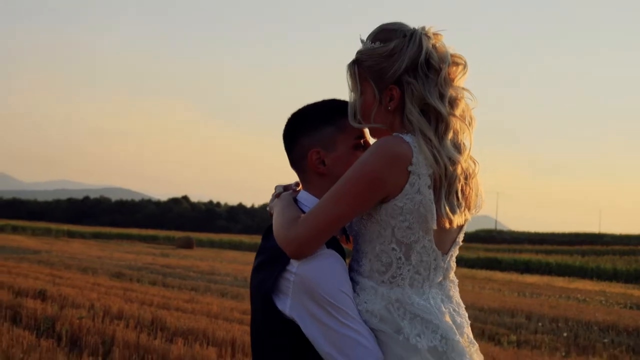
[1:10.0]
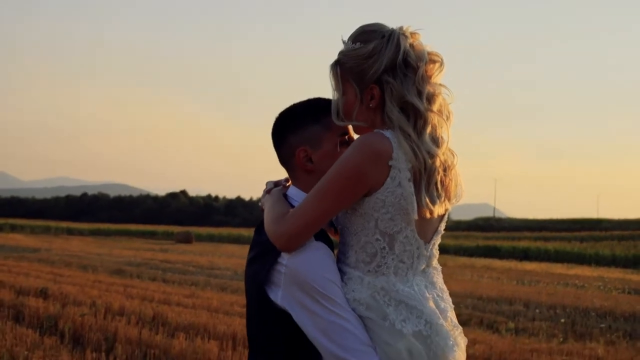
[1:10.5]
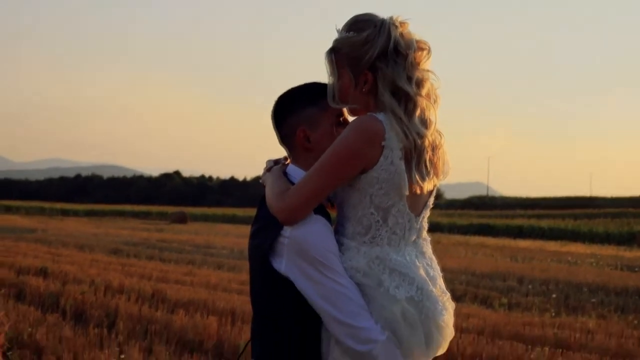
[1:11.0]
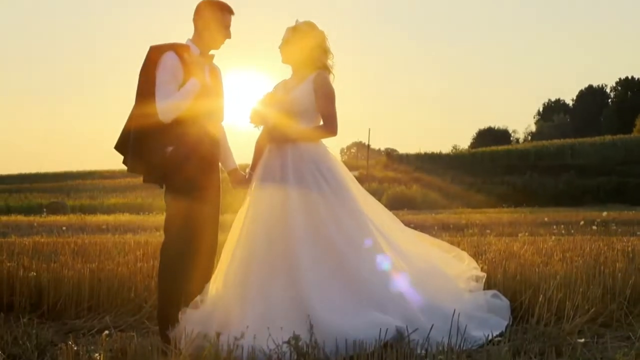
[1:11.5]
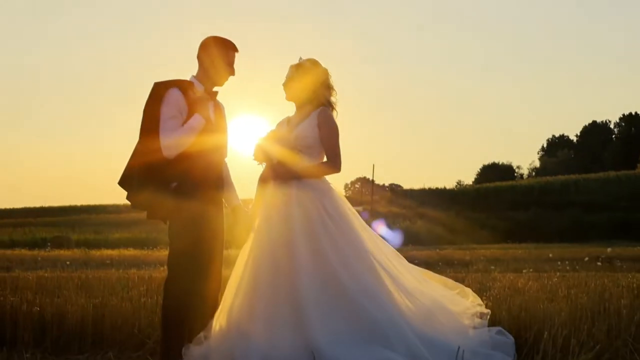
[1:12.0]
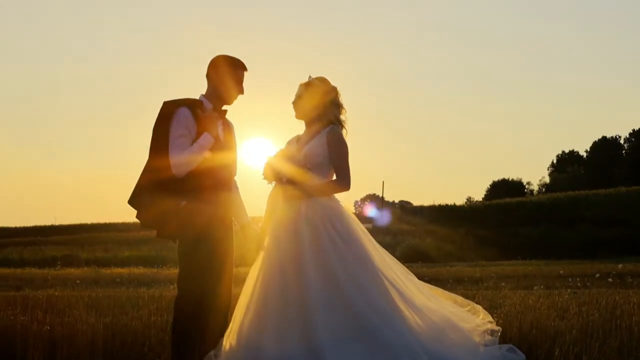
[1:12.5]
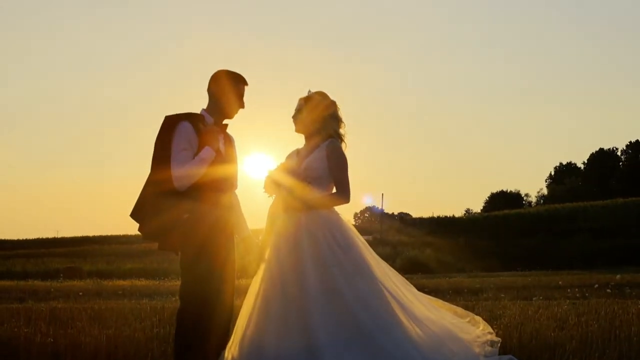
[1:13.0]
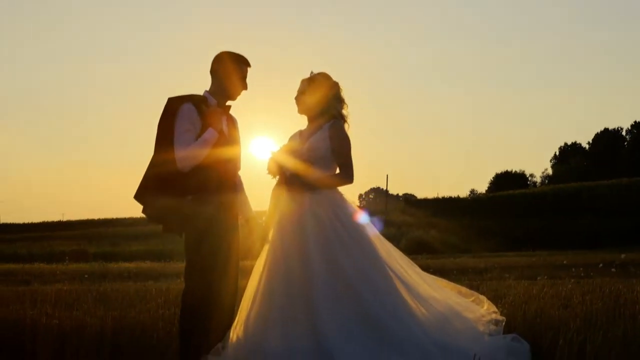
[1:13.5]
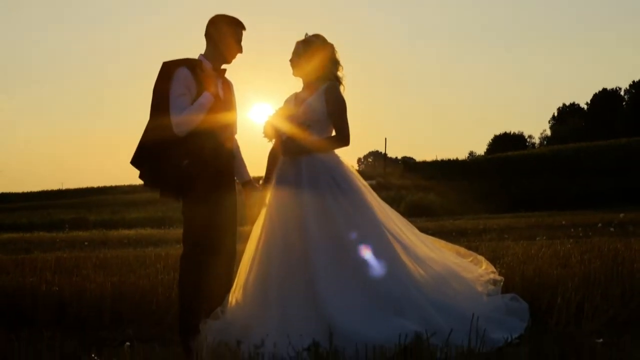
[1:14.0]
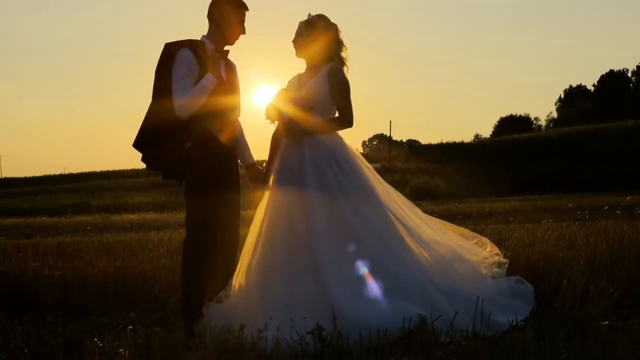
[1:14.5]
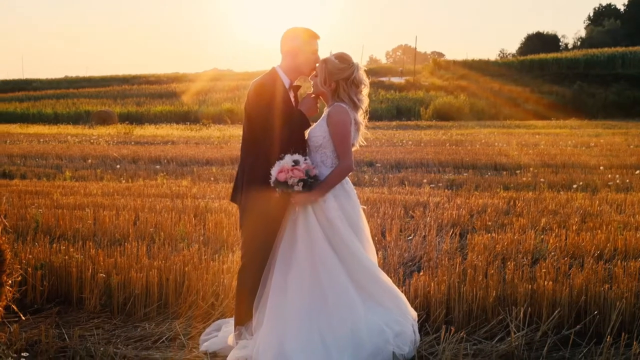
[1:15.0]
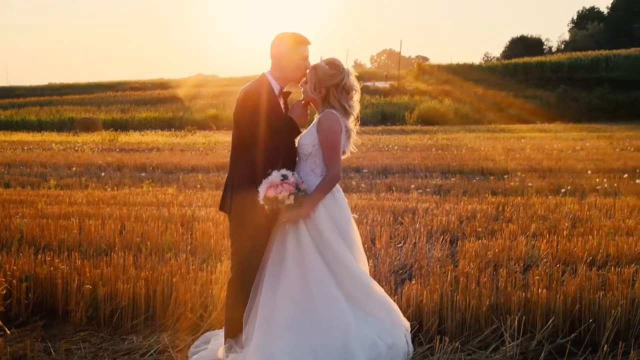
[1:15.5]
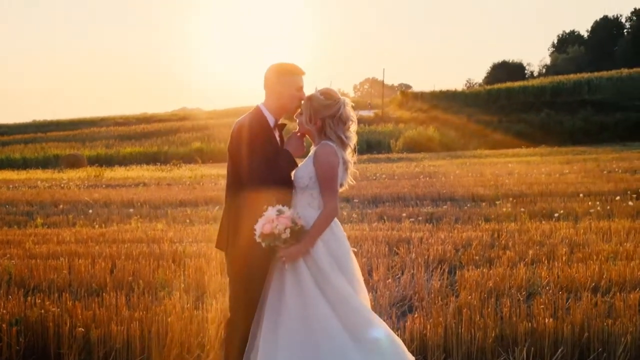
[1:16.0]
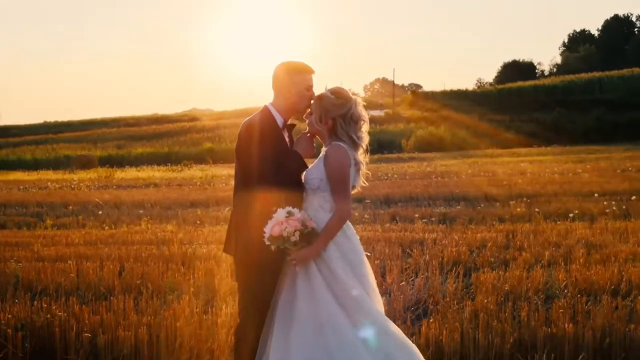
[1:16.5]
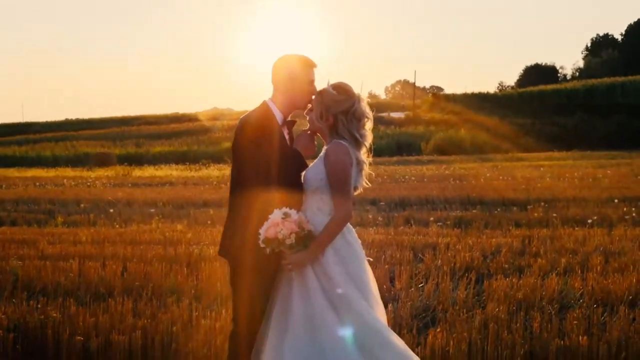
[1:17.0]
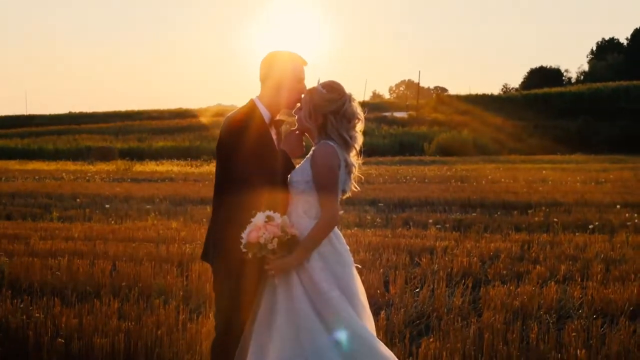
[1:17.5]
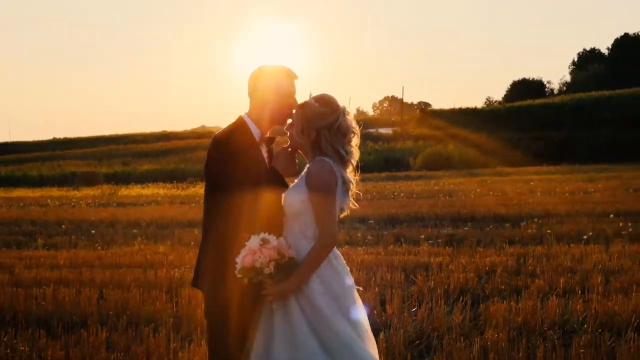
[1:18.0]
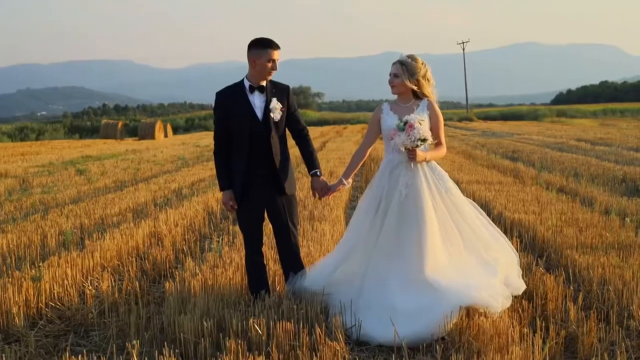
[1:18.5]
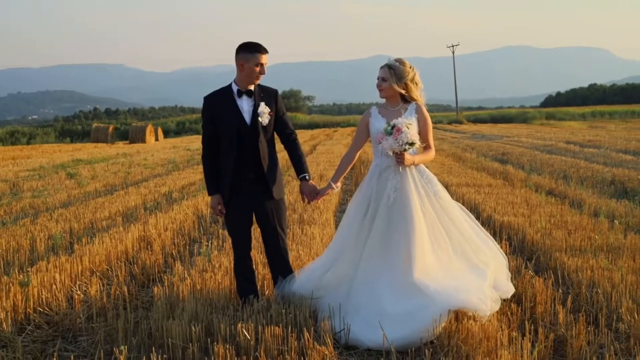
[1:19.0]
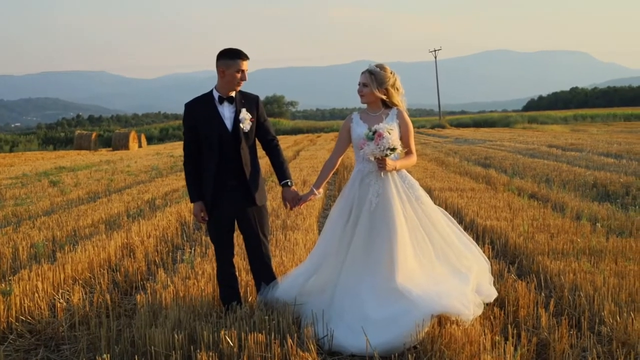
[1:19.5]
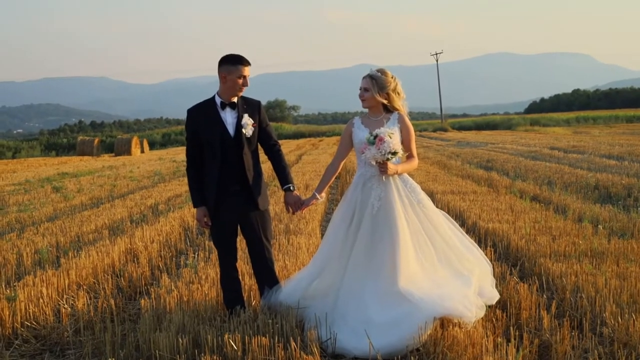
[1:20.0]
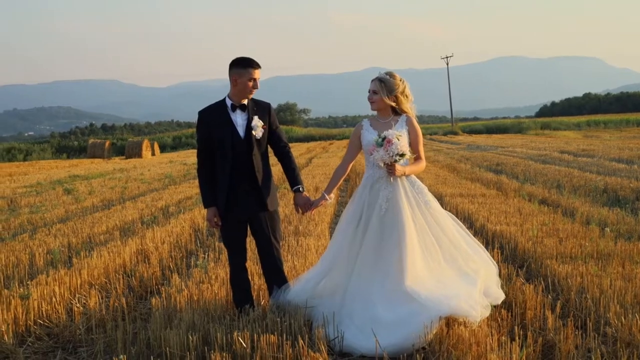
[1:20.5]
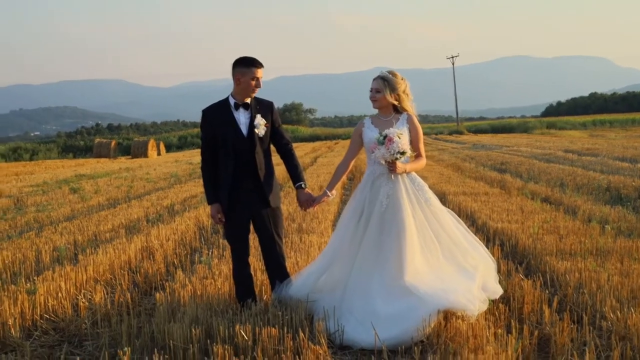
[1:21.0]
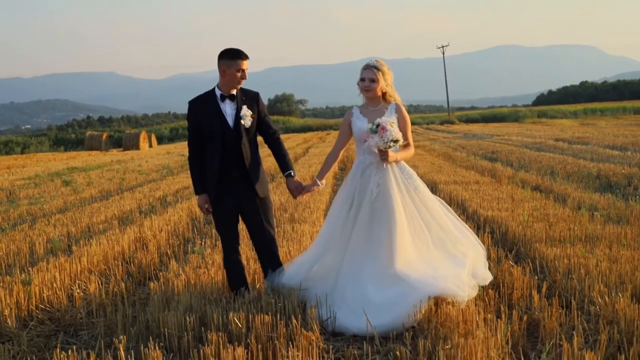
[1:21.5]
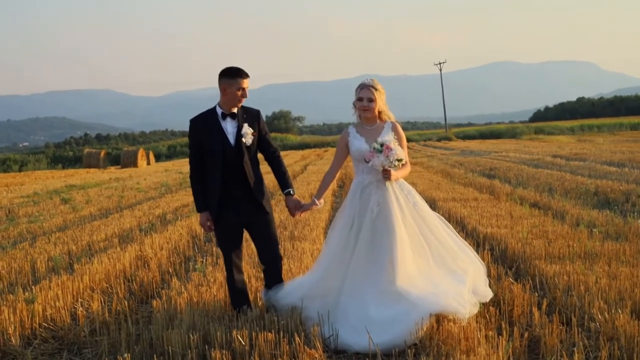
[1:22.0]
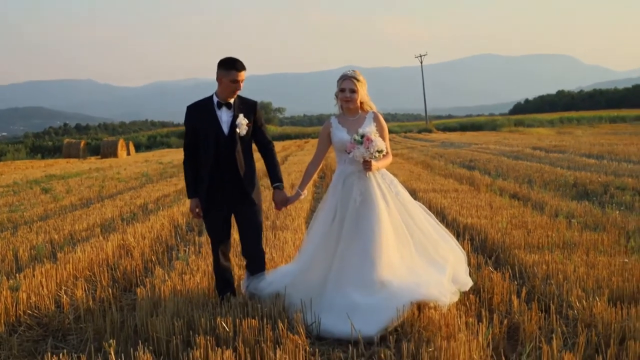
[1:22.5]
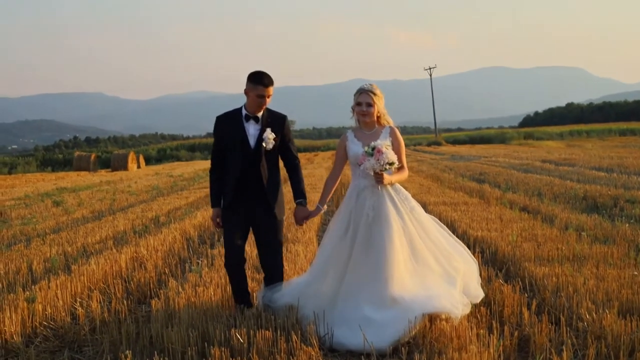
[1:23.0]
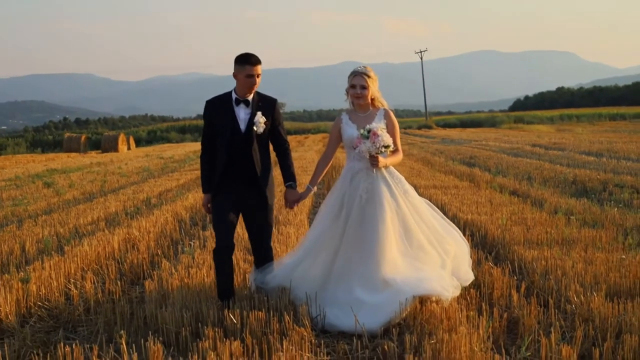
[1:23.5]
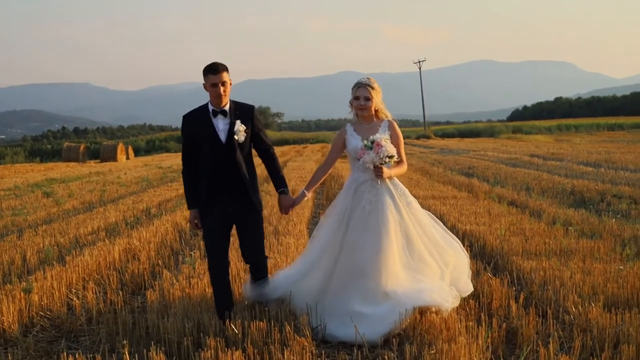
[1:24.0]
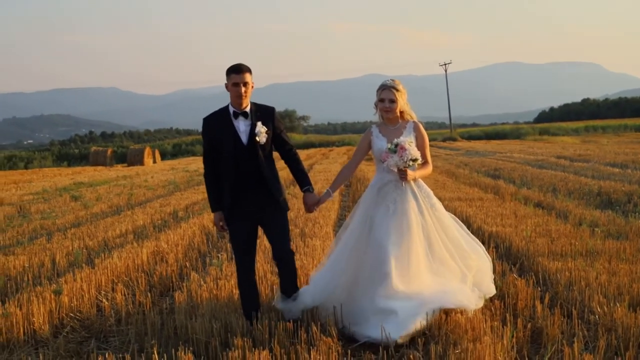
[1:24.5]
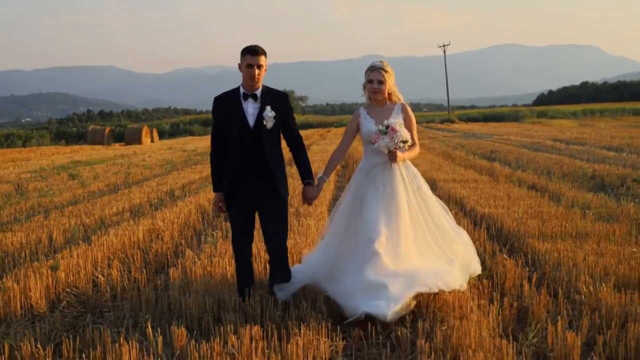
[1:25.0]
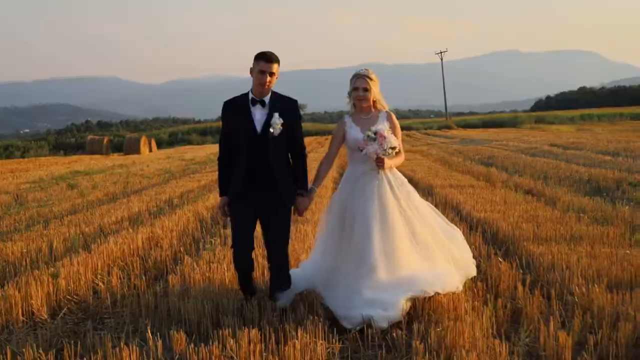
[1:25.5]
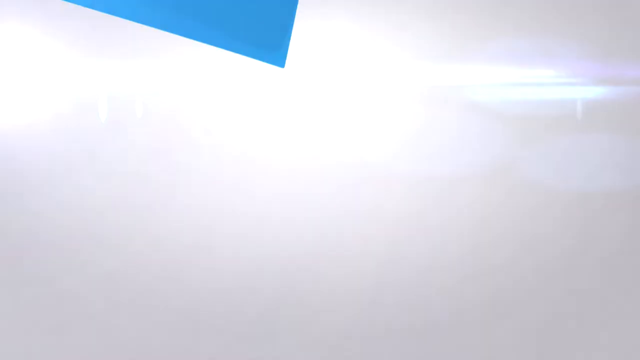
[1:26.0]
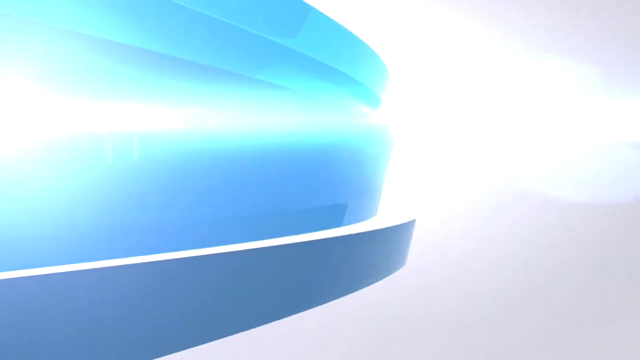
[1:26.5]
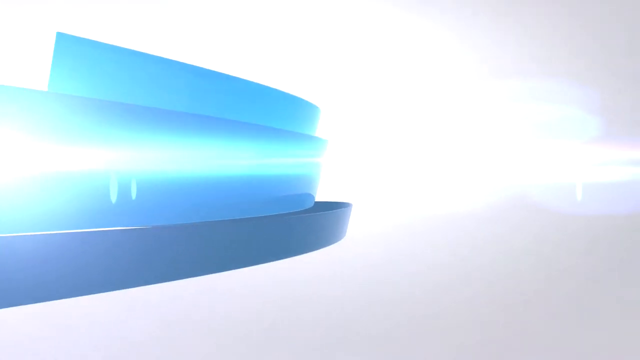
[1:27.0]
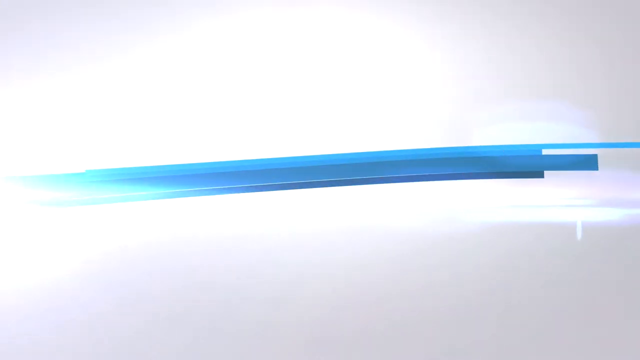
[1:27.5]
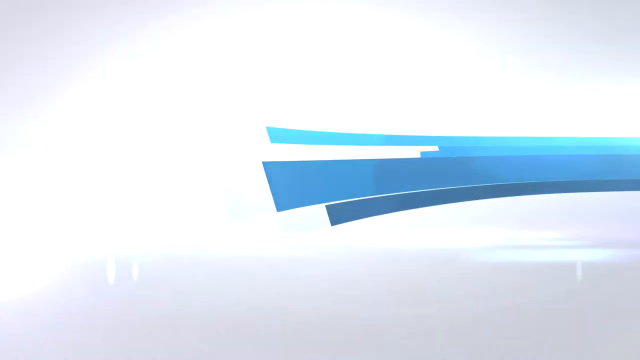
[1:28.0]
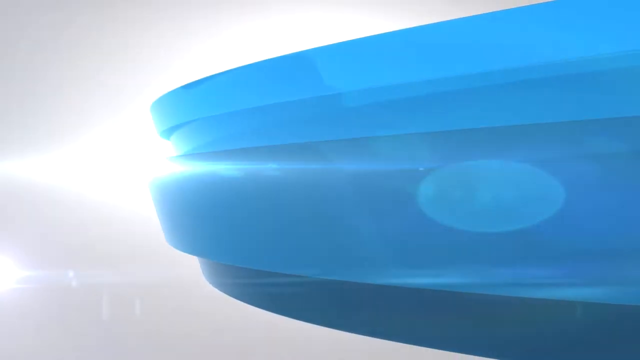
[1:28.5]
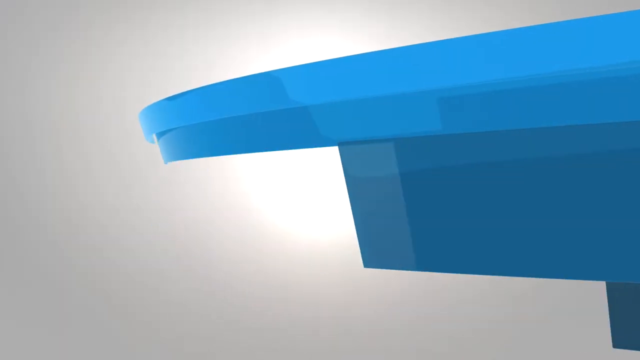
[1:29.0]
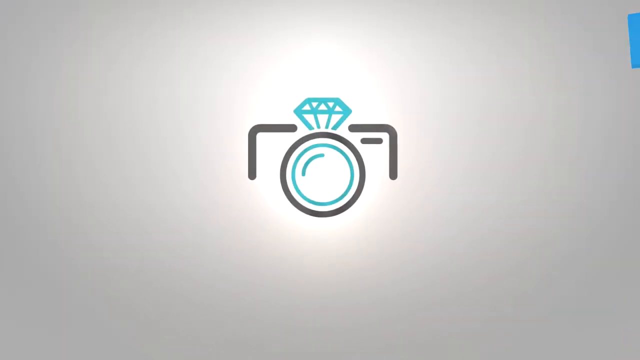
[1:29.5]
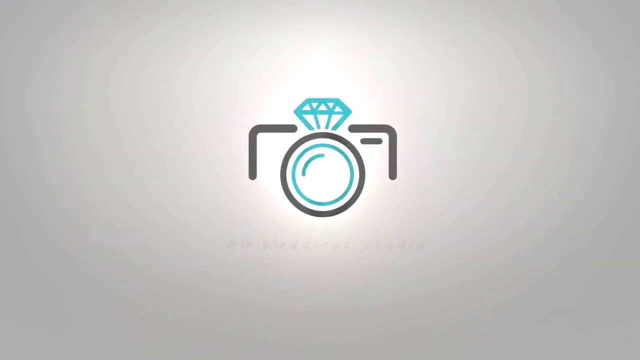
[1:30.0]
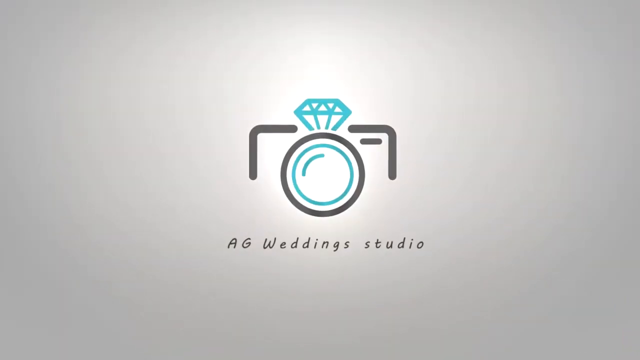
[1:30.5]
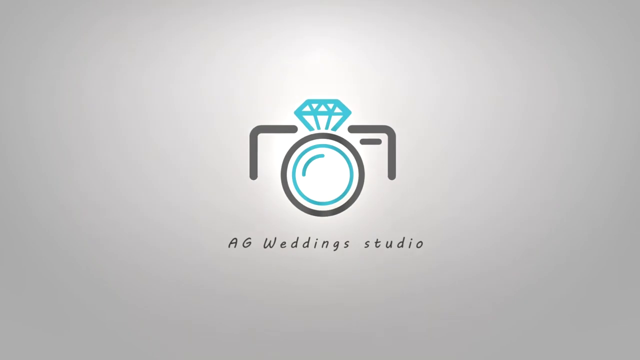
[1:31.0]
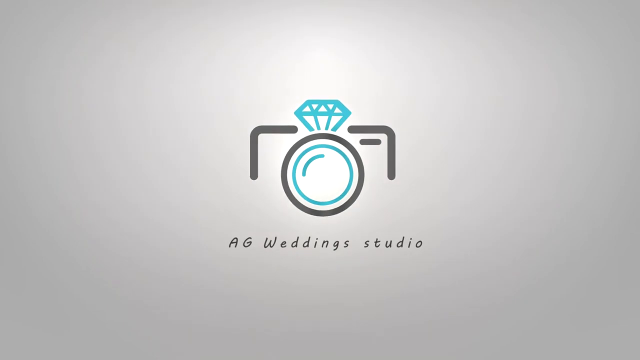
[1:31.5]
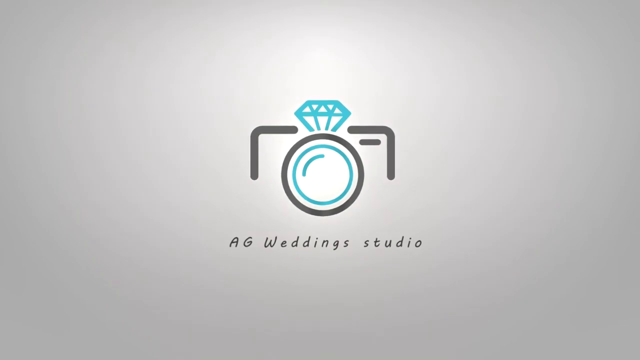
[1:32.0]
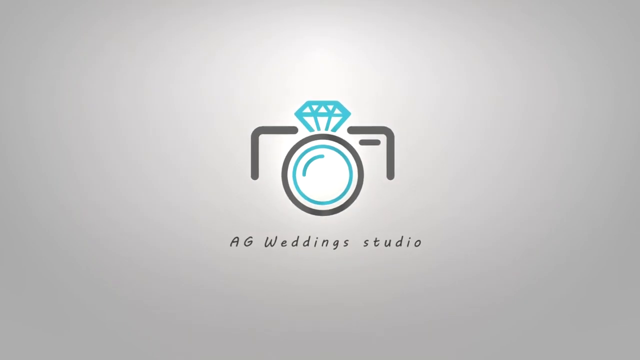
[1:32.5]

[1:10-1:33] The sun has almost completely set, and the couple are in the field in various poses: kissing, holding hands and walking together through the field. The video then goes through scenes from earlier, when it was much lighter: them walking through the field, gazing at each other, him holding her in his arms in the field, and when they first got out and he kissed her on the forehead. It then immediately cuts to a white screen, a blue, kind of wave goes across the screen, and then what looks like a diamond ring appears with the text "AG Weddings Studio".